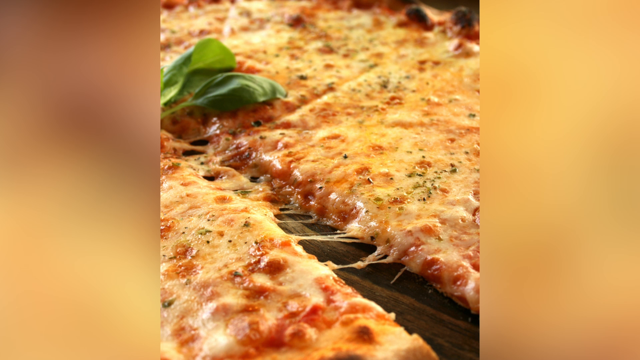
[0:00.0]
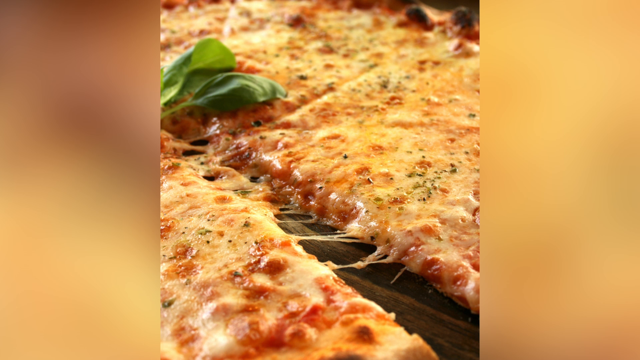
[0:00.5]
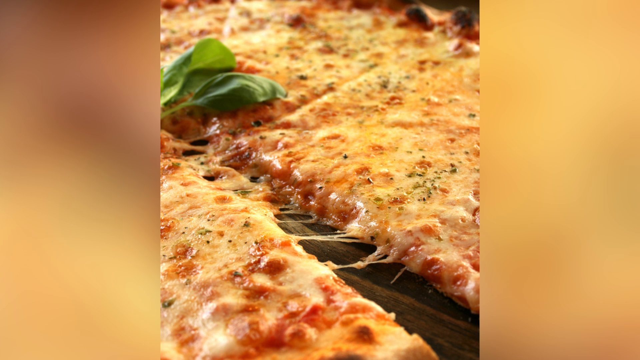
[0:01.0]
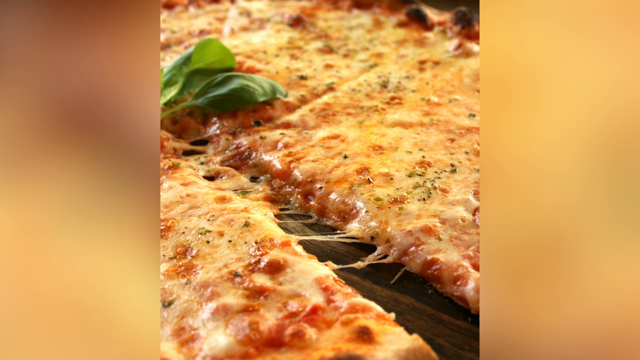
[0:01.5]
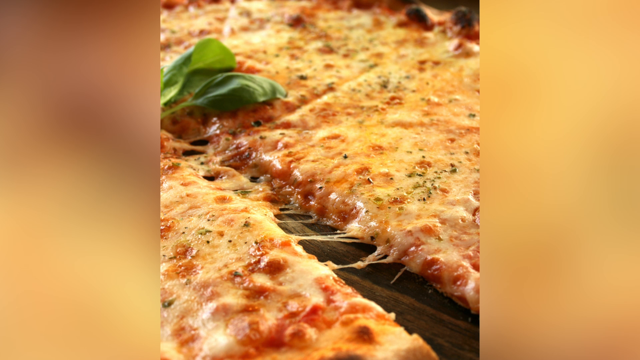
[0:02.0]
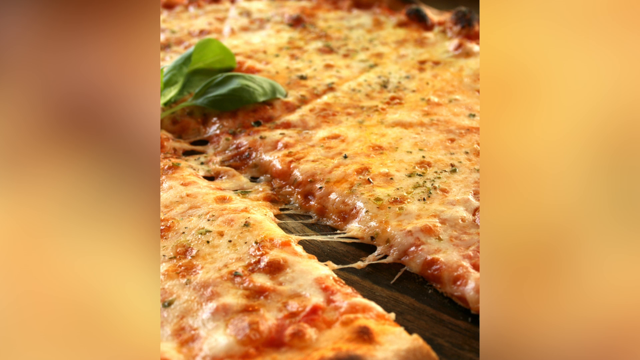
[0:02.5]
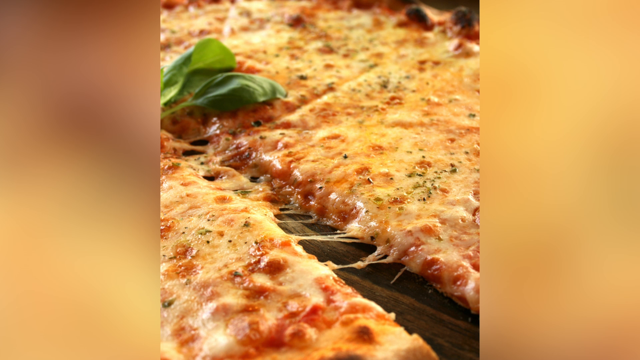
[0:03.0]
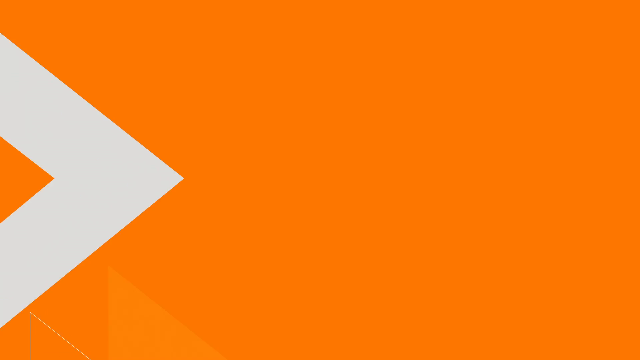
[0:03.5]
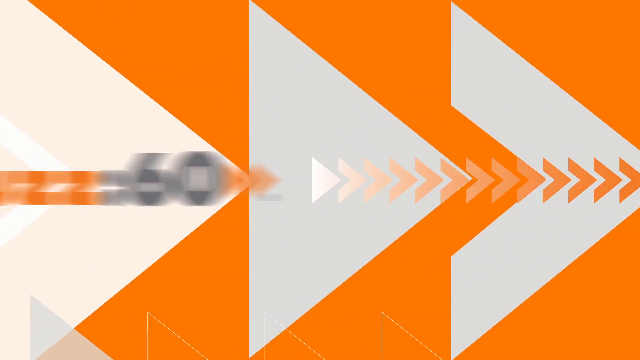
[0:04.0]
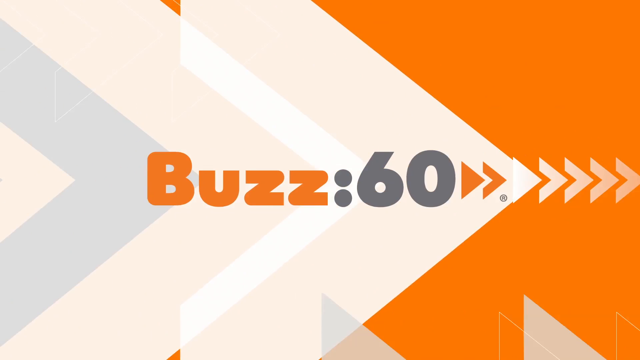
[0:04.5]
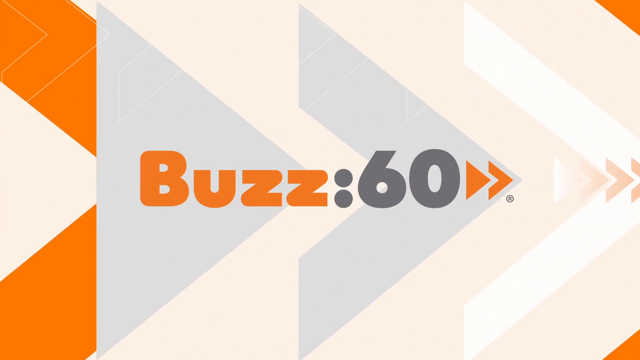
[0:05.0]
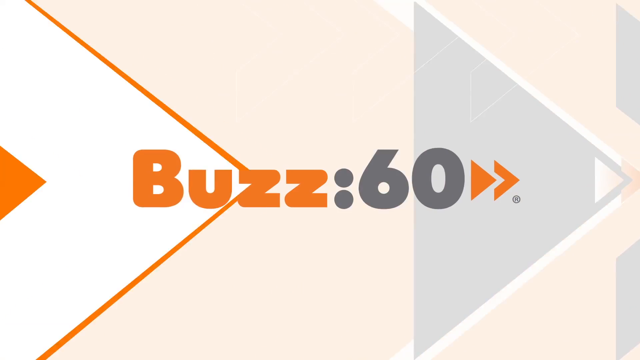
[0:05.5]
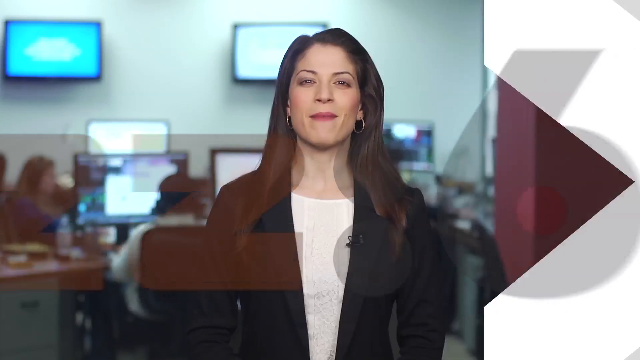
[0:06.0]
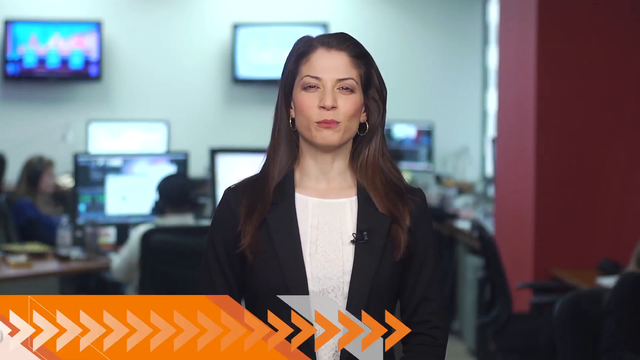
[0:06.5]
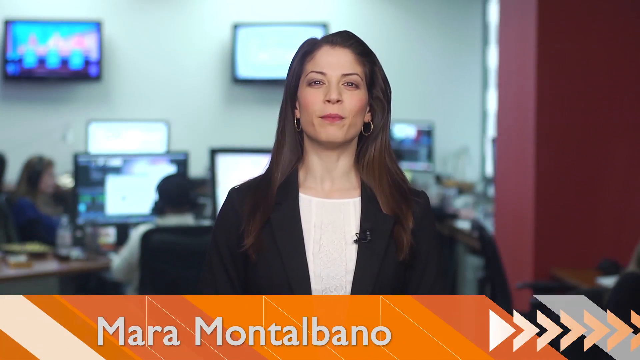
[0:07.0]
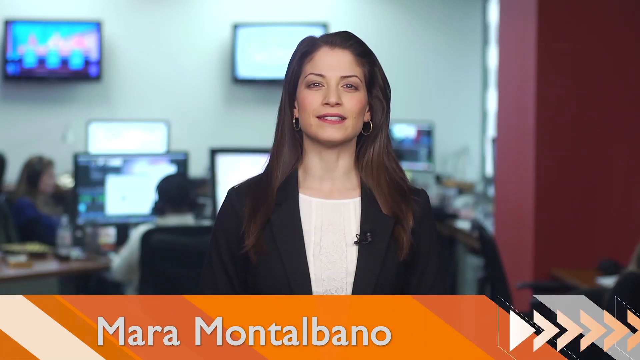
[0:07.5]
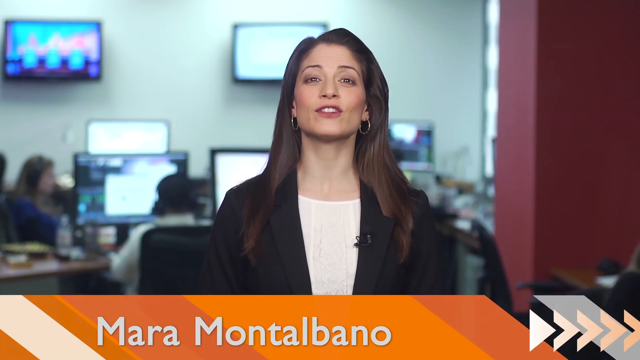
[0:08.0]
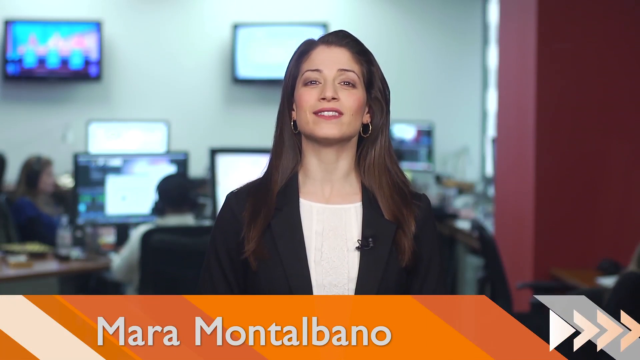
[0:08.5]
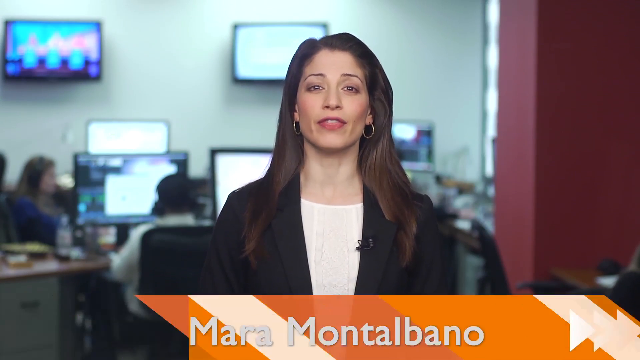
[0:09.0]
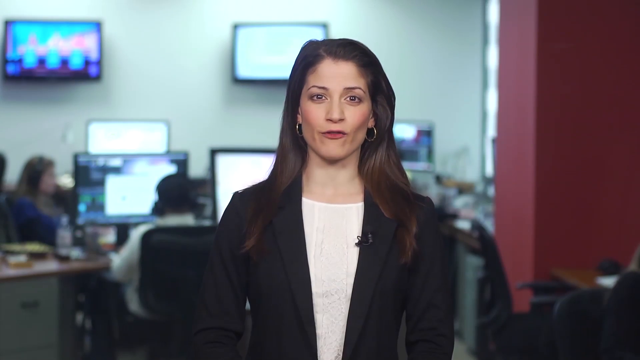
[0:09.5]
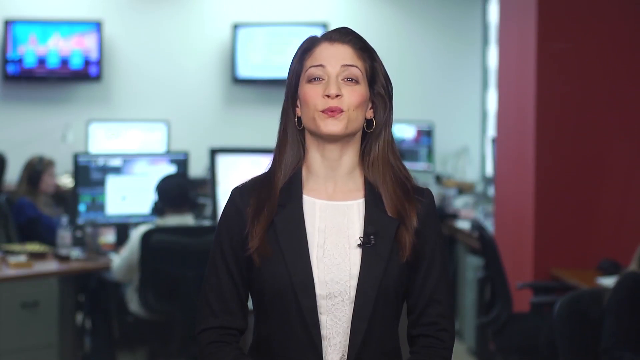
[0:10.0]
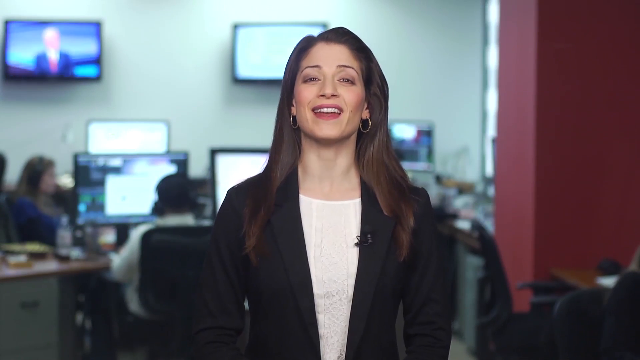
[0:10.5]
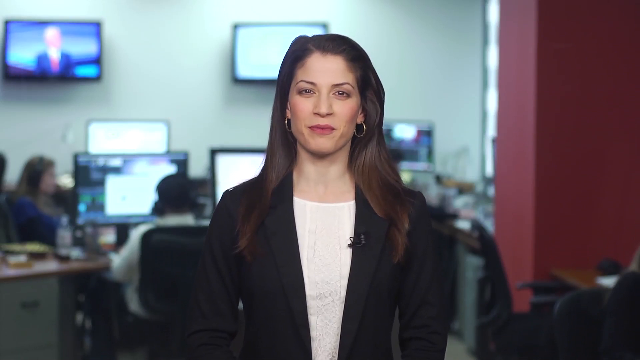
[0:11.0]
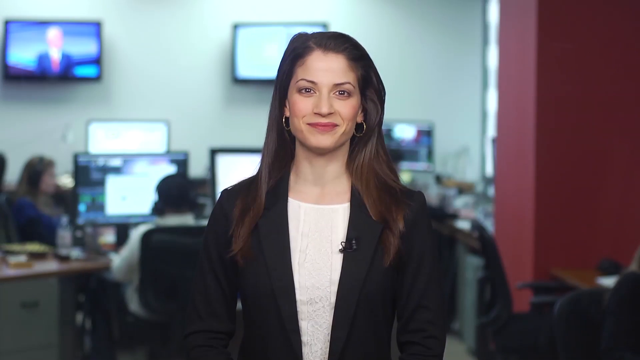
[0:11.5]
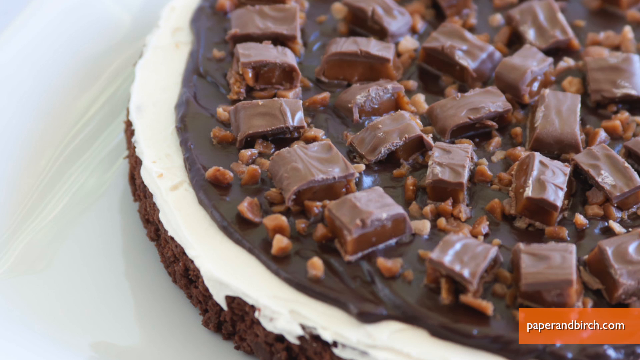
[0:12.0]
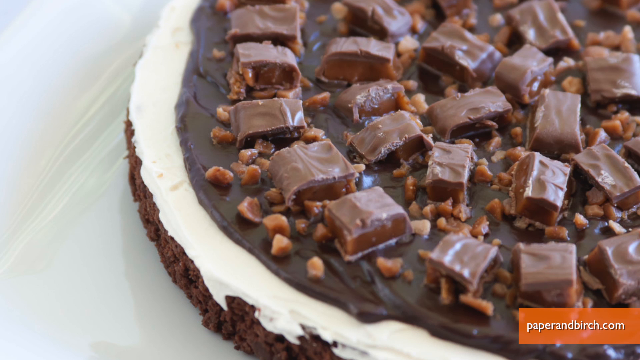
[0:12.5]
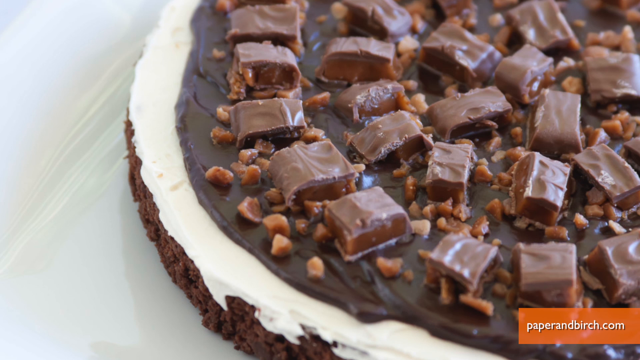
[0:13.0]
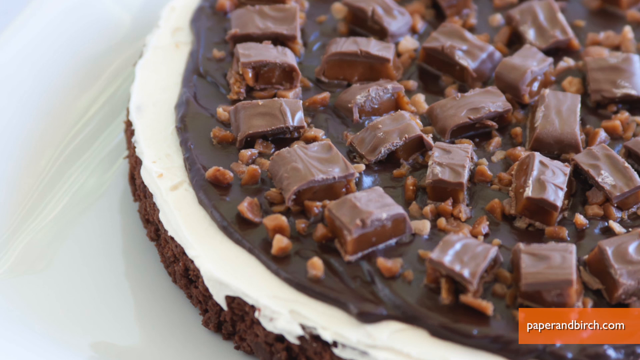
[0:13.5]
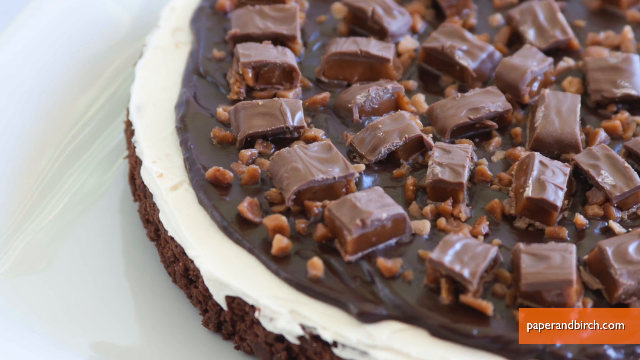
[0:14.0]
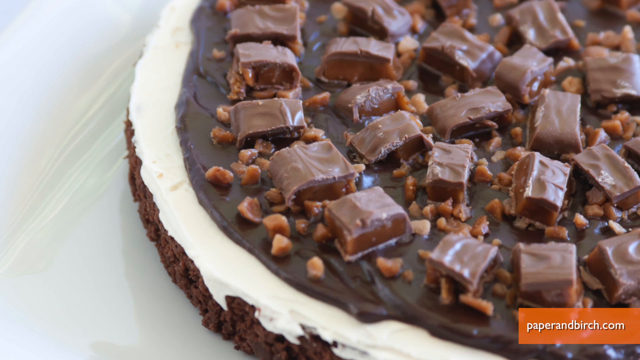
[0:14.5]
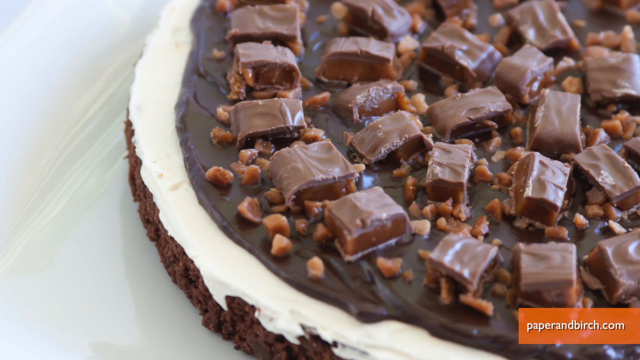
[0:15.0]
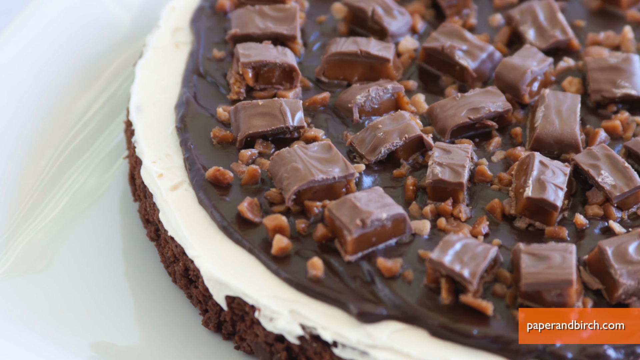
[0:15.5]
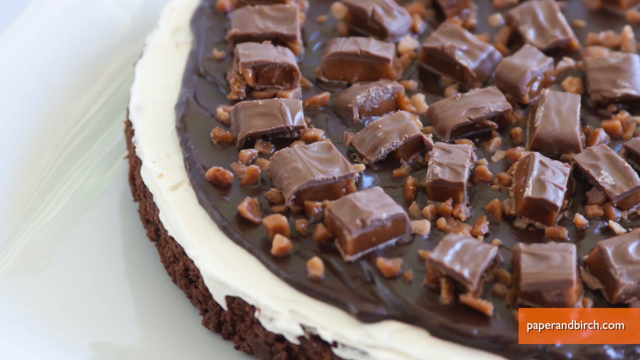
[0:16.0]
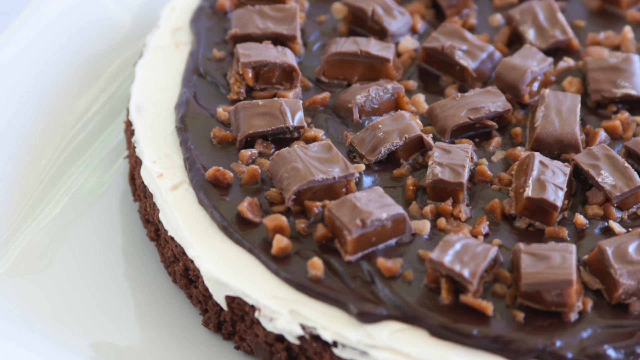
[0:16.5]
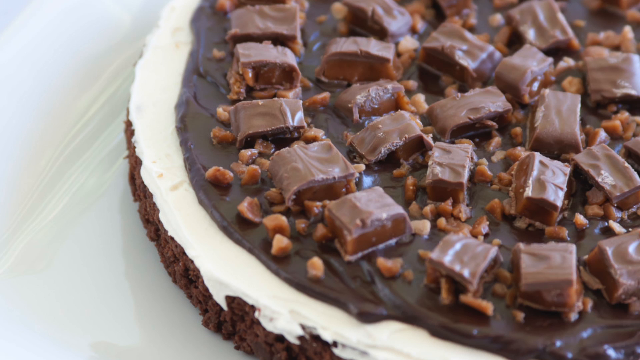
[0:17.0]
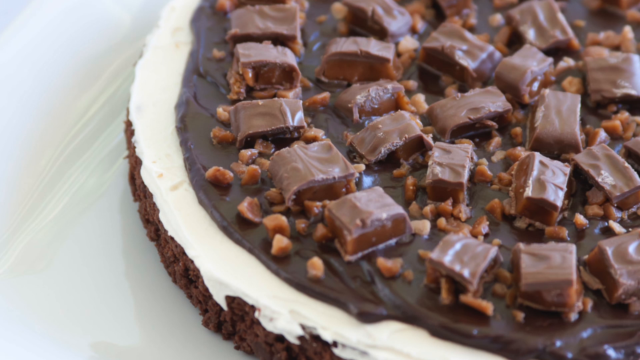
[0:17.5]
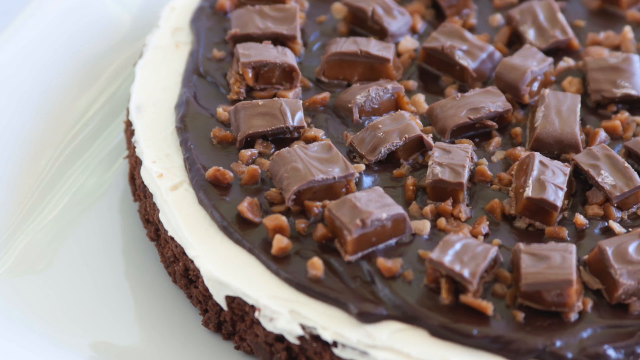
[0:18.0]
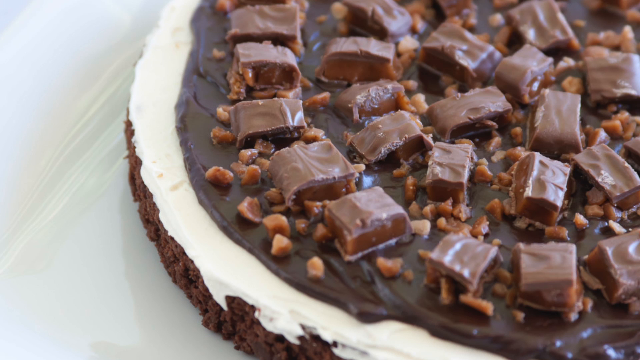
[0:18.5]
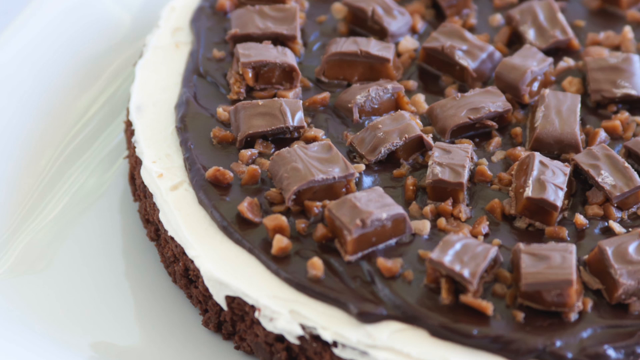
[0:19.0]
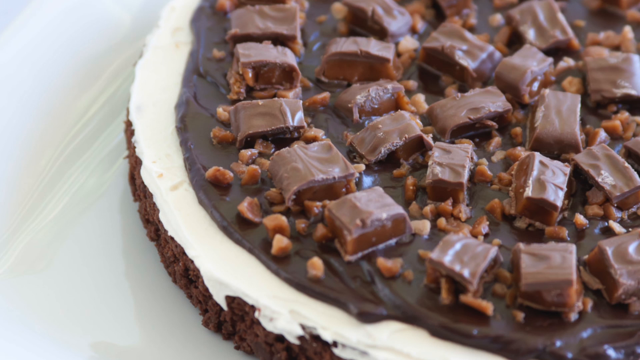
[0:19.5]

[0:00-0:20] Slices of what looks like pizza appear, very cheesy, with the cheese separating, pulling and stretching. A green, leafy-looking thing is laying on top of the pizza, and sauce is visible on it; the shot stays on the screen for a while. Suddenly "Buzz 60" comes on with arrows slashing through. Then Mara Montebello is delivering the report, with TVs in the background. She wears earrings, a black jacket and a white shirt. Pictures are shown of a fudge-like cookie with chocolate, some kind of peanuts, and squares of chocolate all over, along with some white cream; it looks like a delectable dessert.